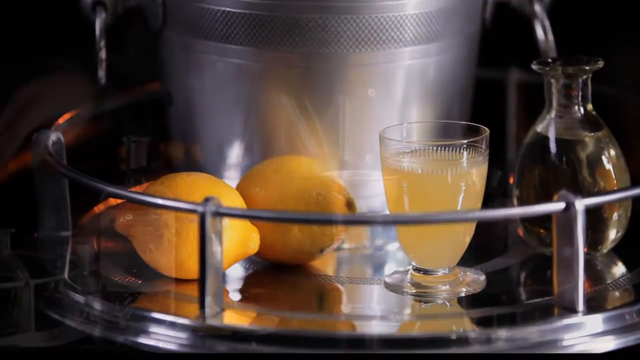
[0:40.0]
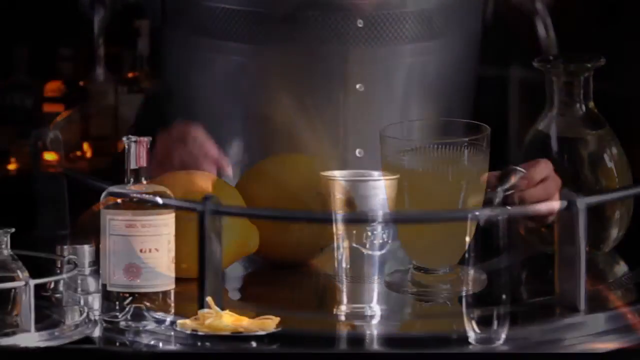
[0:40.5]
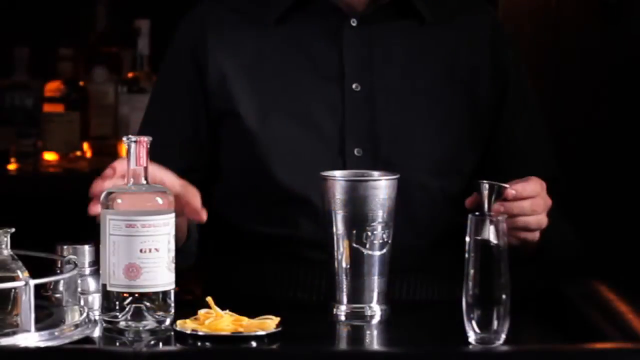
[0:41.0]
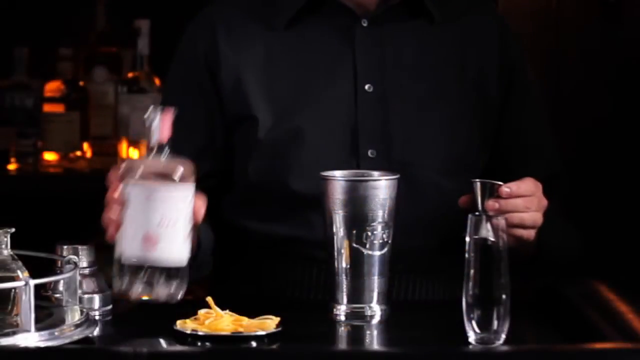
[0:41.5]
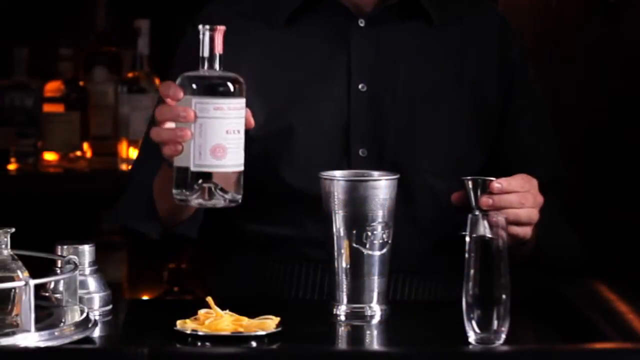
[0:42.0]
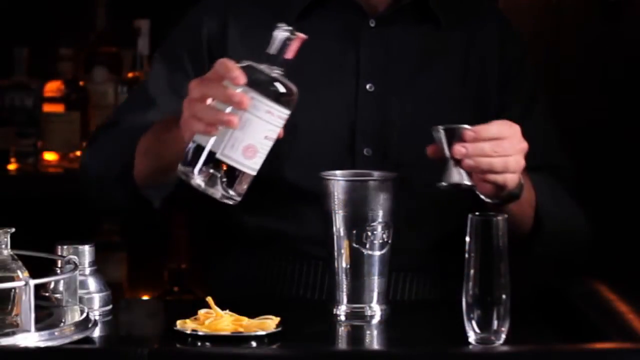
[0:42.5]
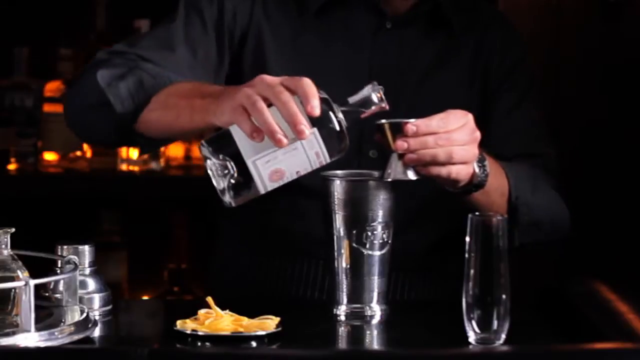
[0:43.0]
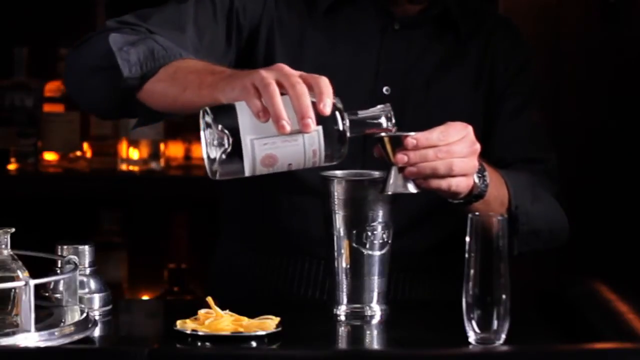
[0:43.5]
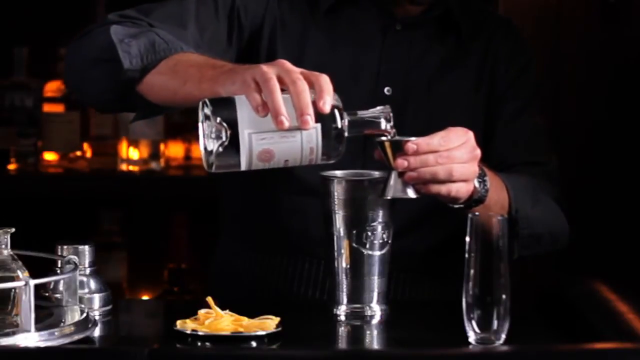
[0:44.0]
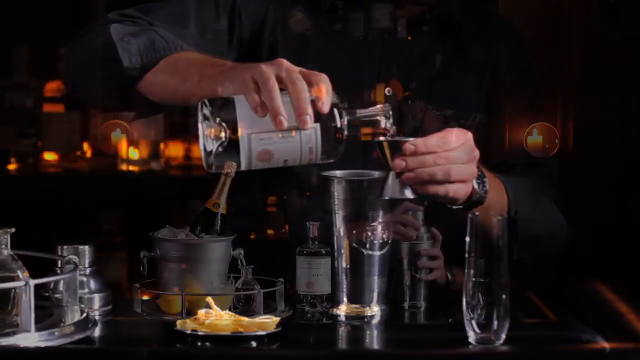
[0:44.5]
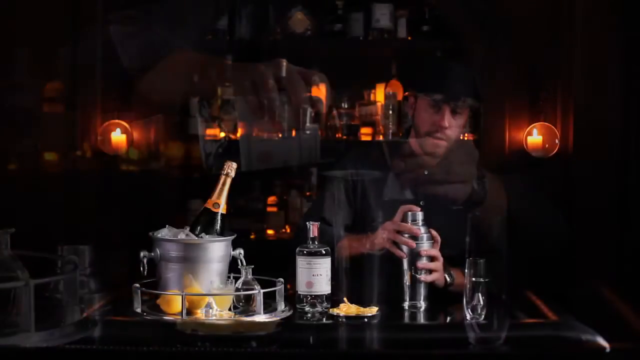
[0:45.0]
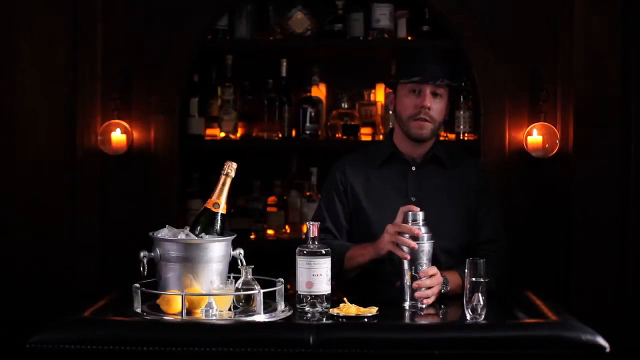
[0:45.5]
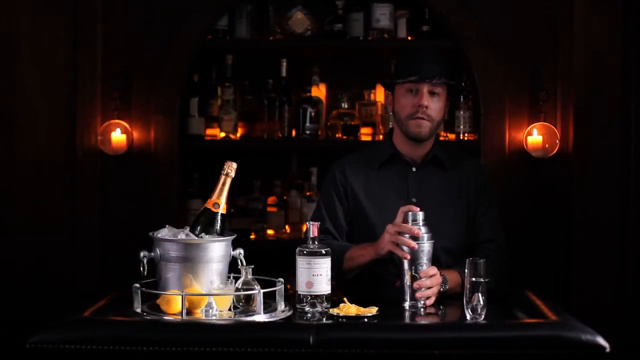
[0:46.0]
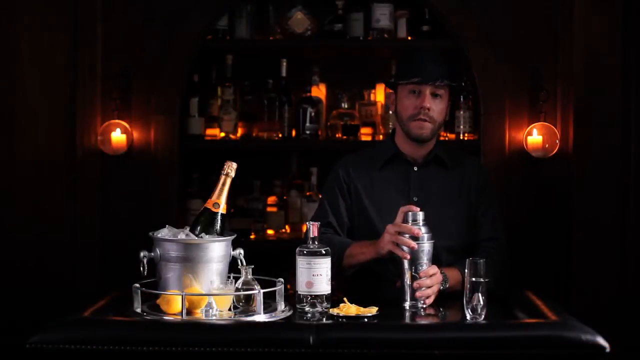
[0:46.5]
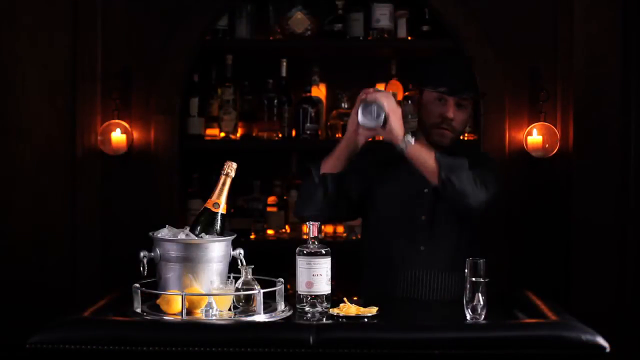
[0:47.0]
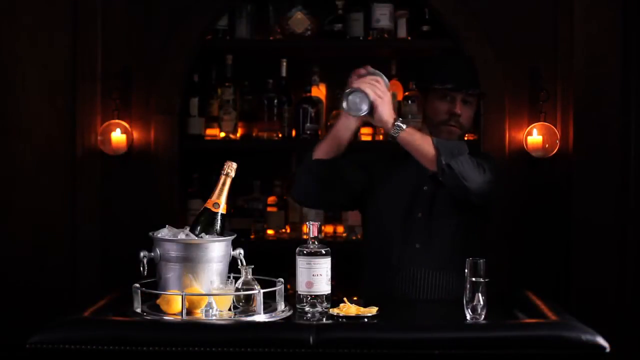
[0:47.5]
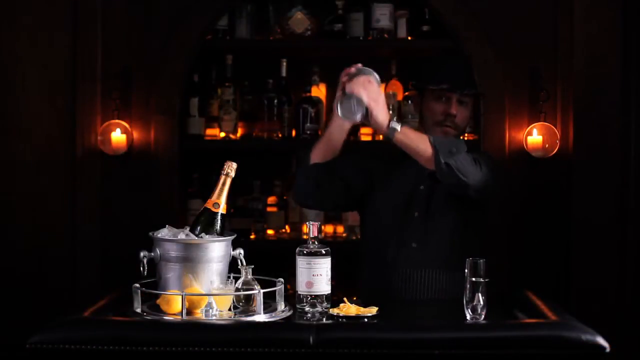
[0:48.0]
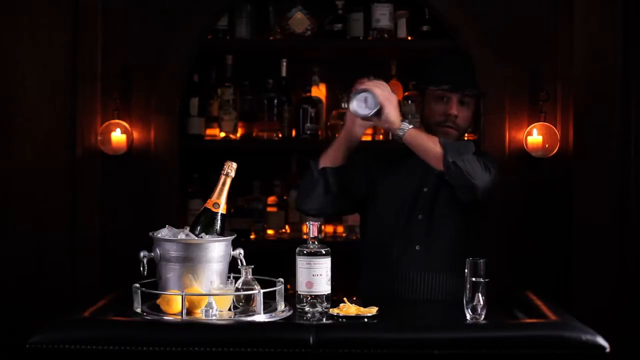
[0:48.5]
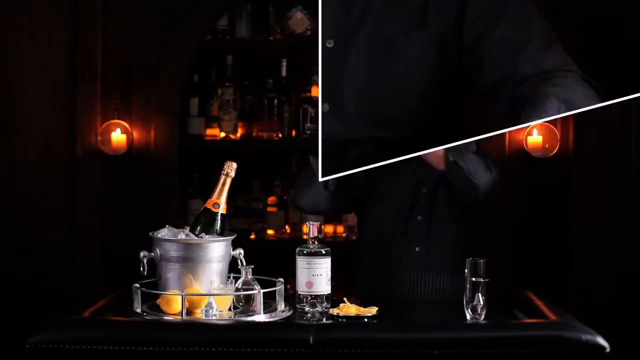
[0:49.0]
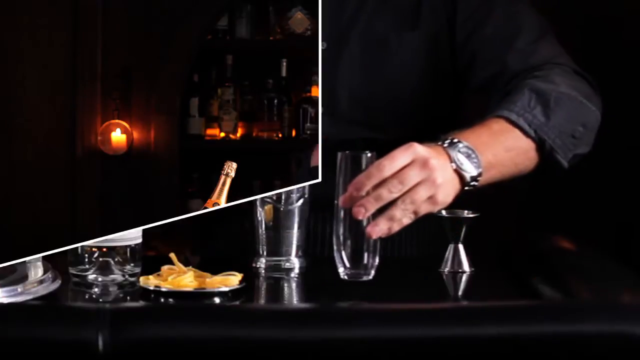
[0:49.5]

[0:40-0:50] The bartender adds gin into the mixer, along with some ice cubes; so far he has added the gin, the syrup and a little lemon juice. He closes the mixer and shakes it, holding it at the right side of his face, then bringing it back to the left side of his shoulder. Judging by the way he shakes the silver mixer, he looks like an expert who knows what he is doing.